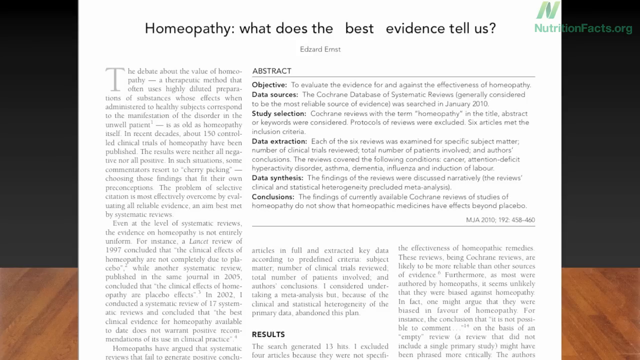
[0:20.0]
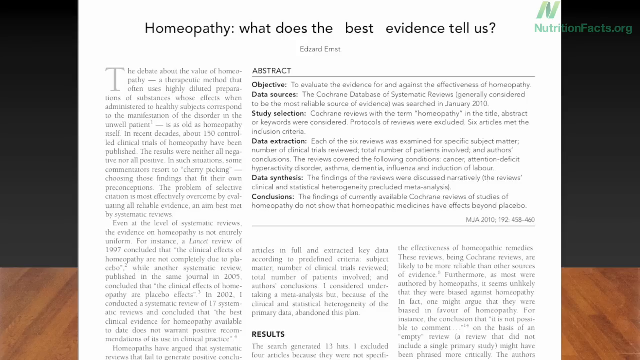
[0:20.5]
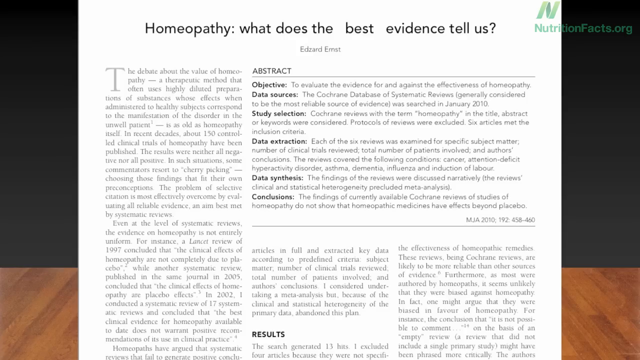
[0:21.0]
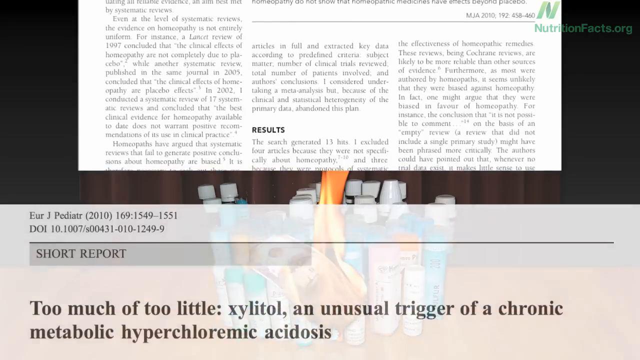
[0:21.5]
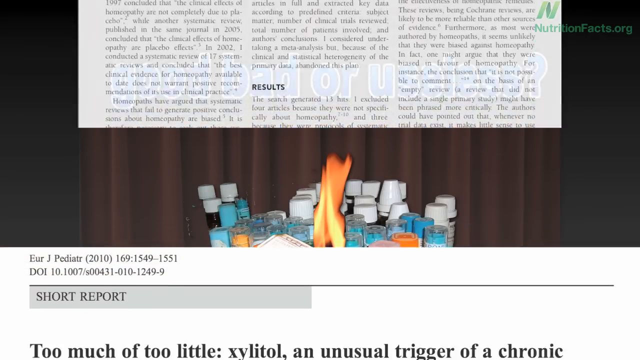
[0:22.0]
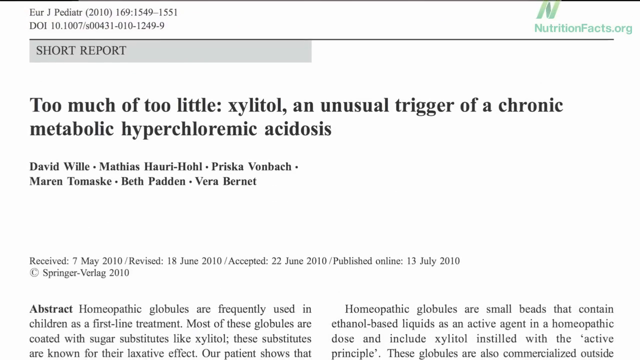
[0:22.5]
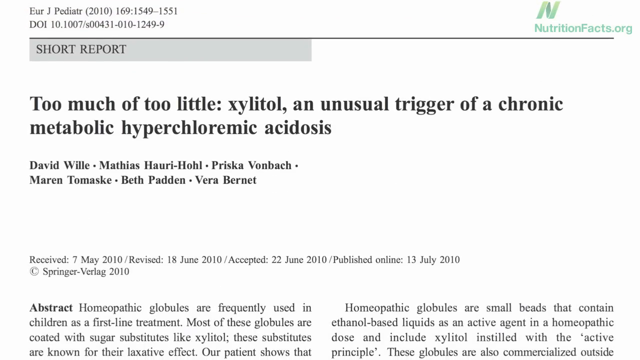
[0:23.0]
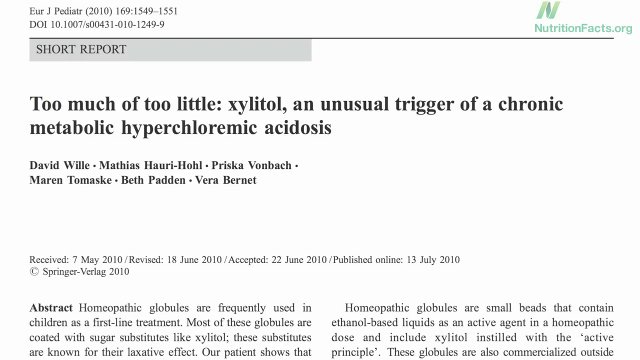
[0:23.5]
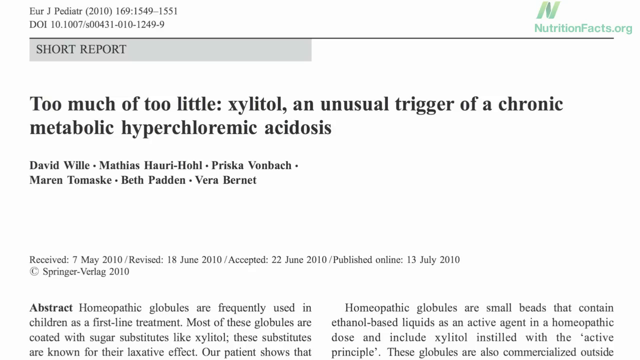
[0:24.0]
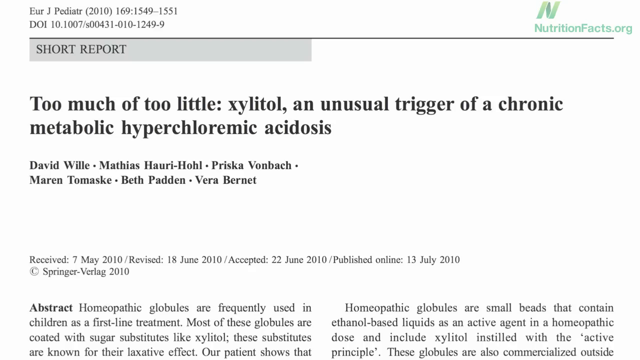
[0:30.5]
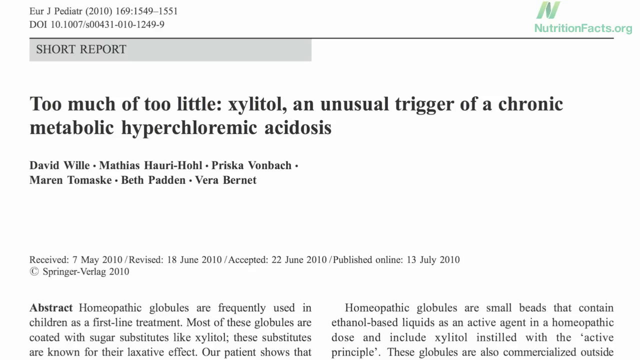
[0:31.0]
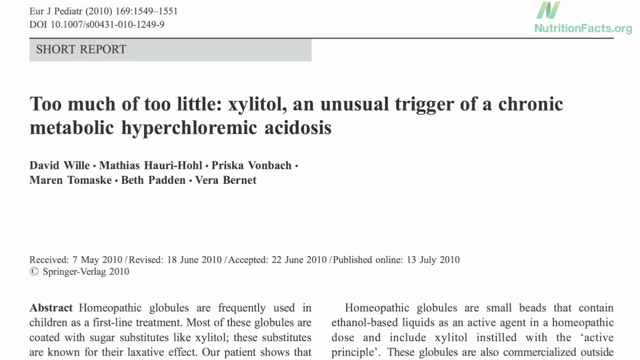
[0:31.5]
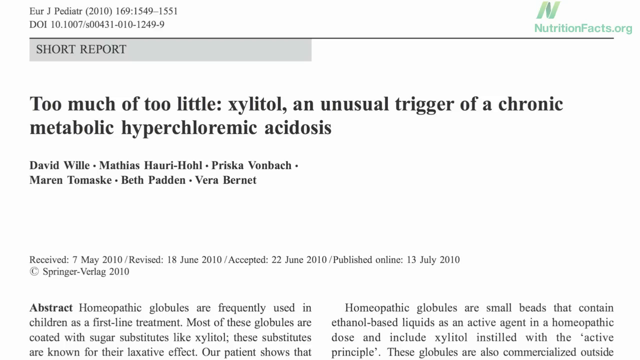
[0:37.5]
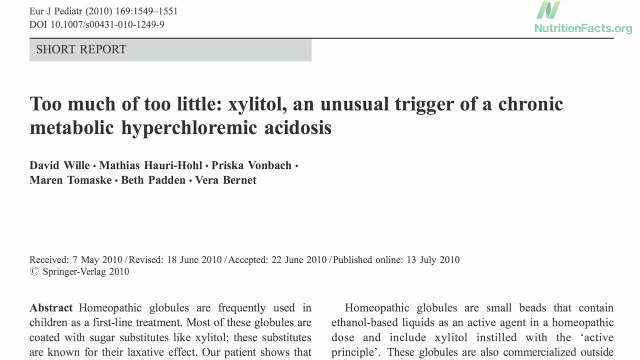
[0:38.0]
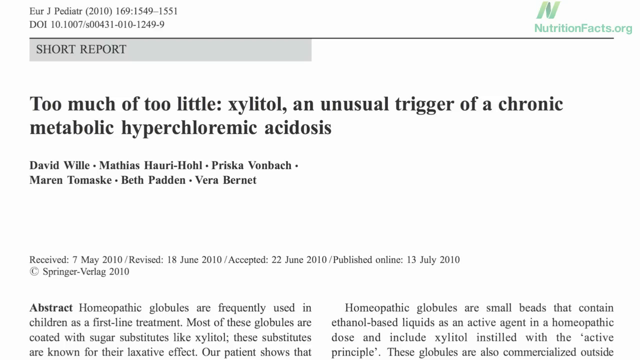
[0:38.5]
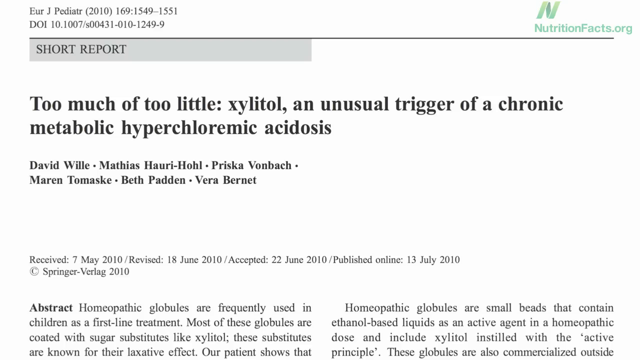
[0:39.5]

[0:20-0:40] The abstract article is shown until it switches over to a short report with black text on a white background, titled "too much of too little xylitol, an unusual trigger of a chronic metabolic hypochloramic acidosis." The researchers who contributed to the article are listed: David Willey, Matthias Harvey-Hall, Prisca von Bonk, Warren Tomaske-Beth Paden and Vera Burnett. It was written on the 7th of May 2010, revised in June 2010, accepted on June 27, 2010, and published on July 13, 2010. Little else of the article's content can be made out. nutritionfacts.org remains in the top right corner, and the article's white background takes up the entire screen, with little visible behind it.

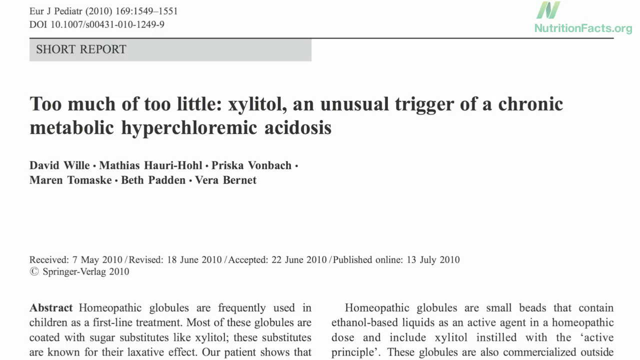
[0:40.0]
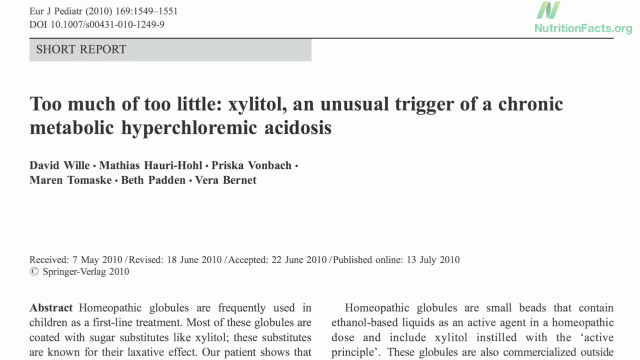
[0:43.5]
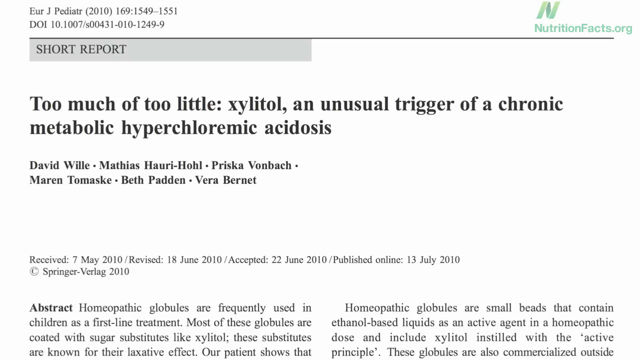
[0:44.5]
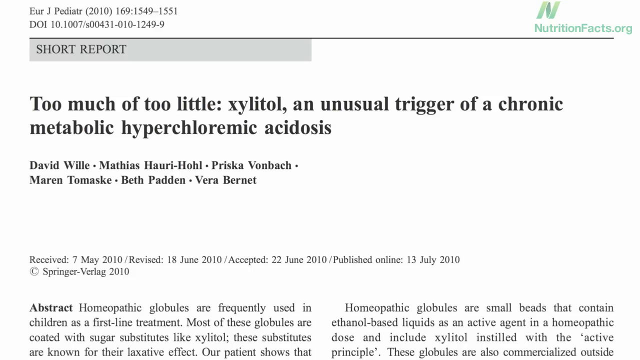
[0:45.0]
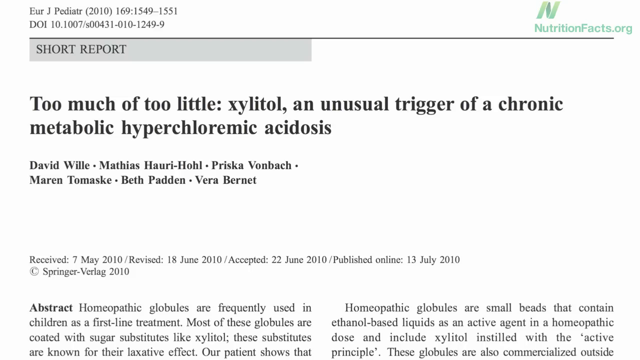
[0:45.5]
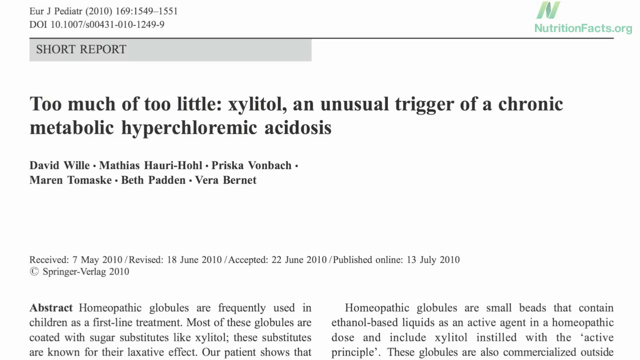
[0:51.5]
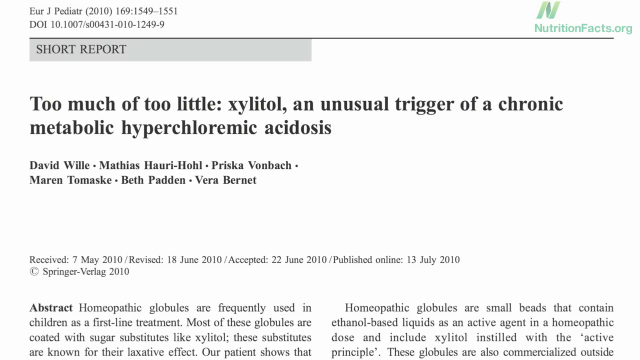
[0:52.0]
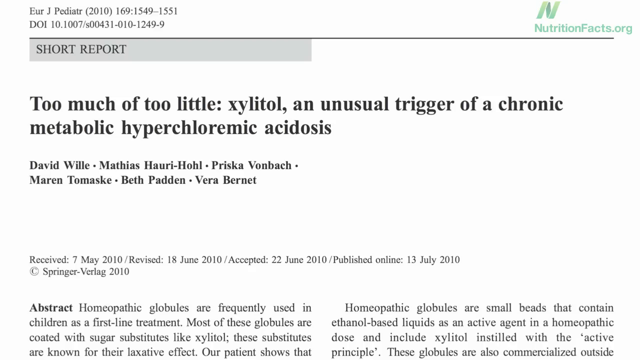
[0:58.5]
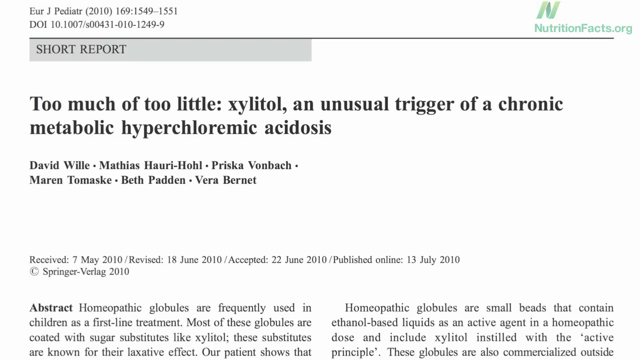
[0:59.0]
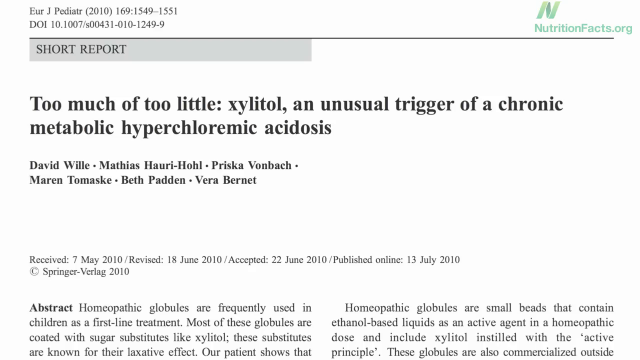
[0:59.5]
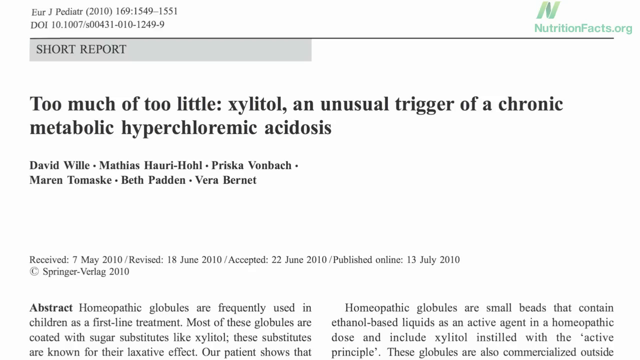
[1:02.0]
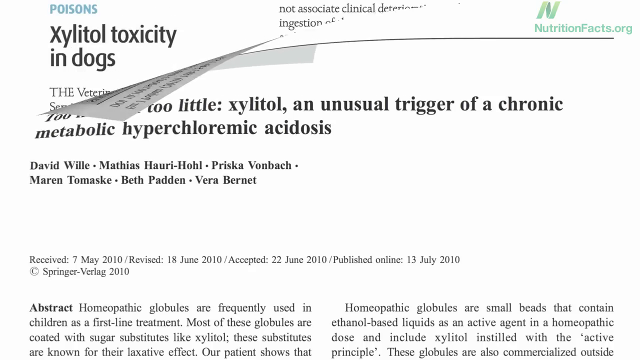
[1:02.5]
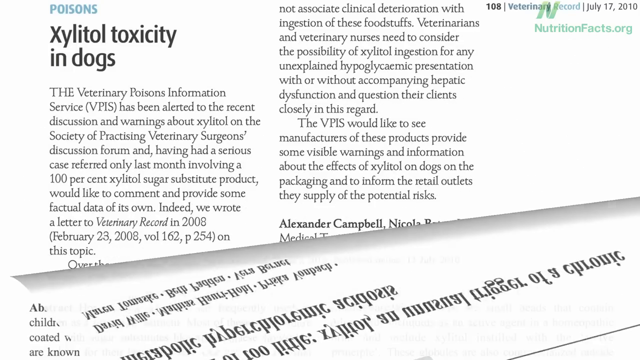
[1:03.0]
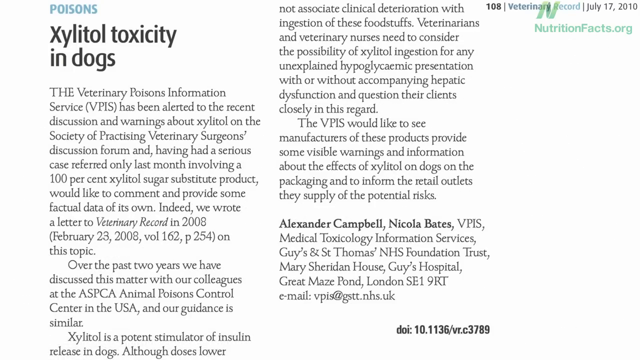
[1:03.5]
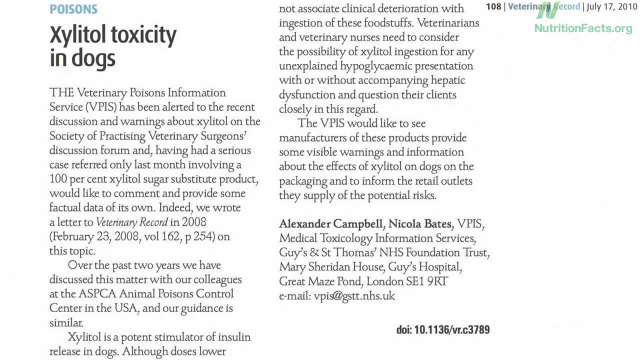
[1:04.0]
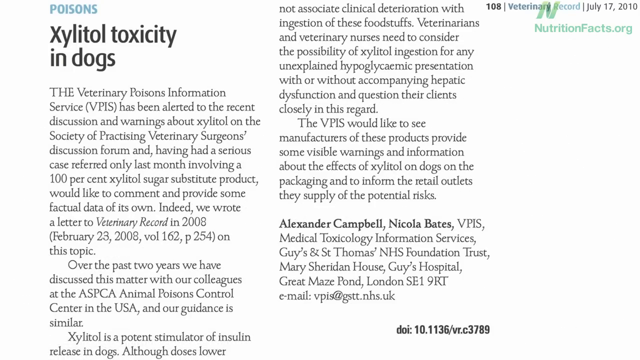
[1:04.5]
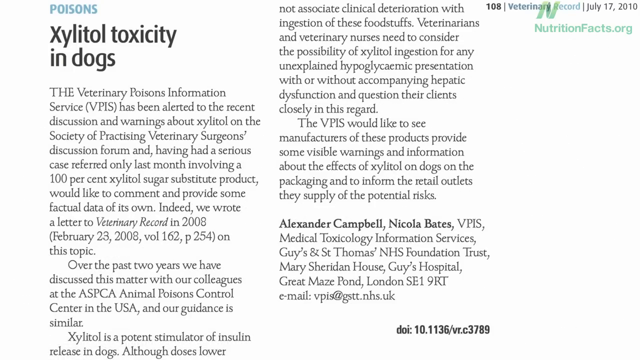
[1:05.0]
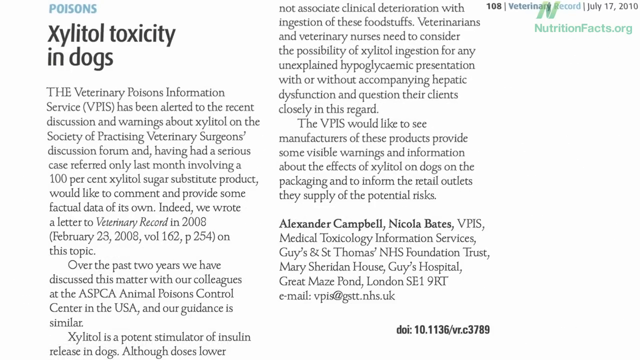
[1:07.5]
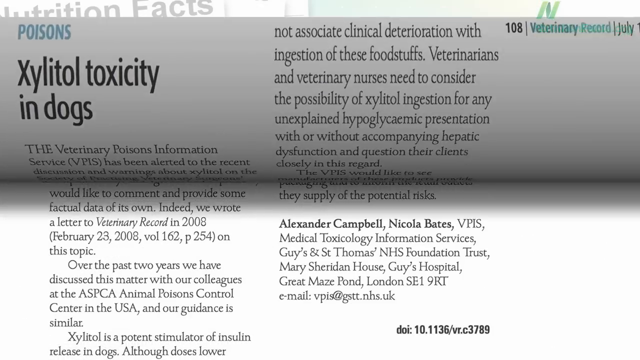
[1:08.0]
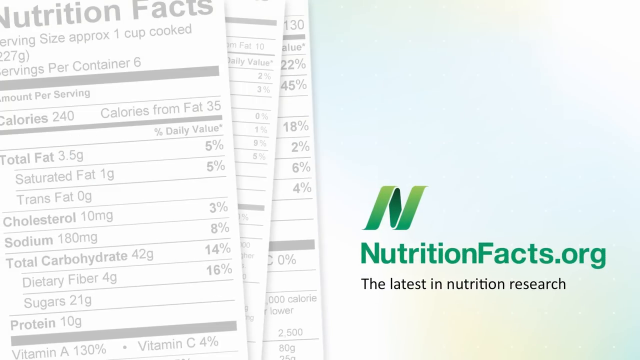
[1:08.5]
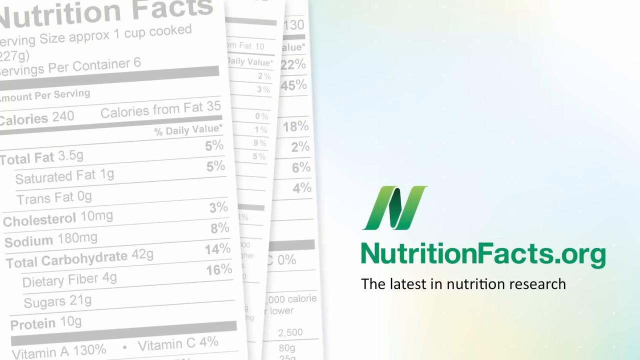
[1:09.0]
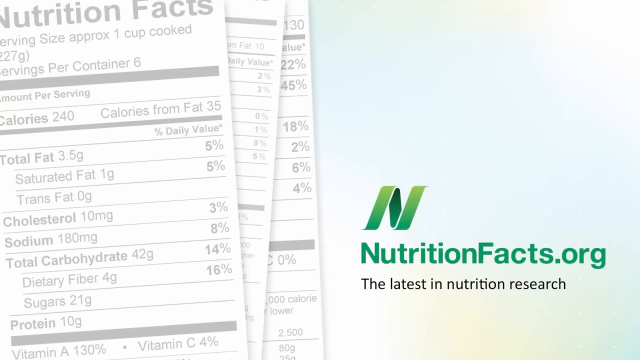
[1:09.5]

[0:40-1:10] The abstract becomes a little more legible. It reads: "homeopathic globules are frequently used in children as first-line treatment. Most of these globules are coated with sugar substitutes like xylitol. These substitutes are known for their laxative effect. Our patient shows that," and the rest is hard to see. The video then moves on to another article titled "Poisons, Xylitol, Toxicity, and Dogs," laid out in two columns. The first column below the title begins: "the Veterinary Poisons Information Service has been alerted to the recent discussion and warnings about Xylitol in the Society of Practicing Veterinary Surgeons discussion forum," and continues with mention of a serious case involving a 100% xylitol sugar substitute product, then: "Indeed, we wrote a letter to Veterinary Record in 2008 on this topic. Over the past two years, we have discussed the matter with our colleagues at the ASPCA Animal Poisons Control." Nothing more of that column is visible. The video then ends abruptly.